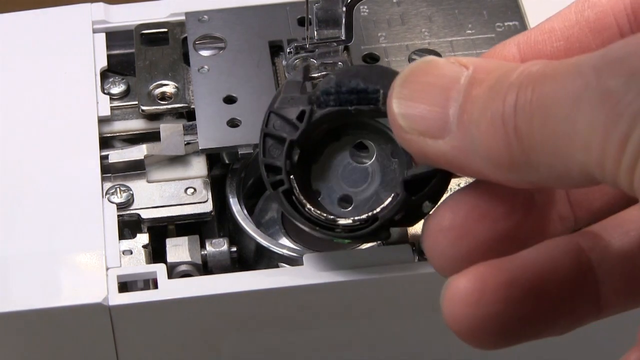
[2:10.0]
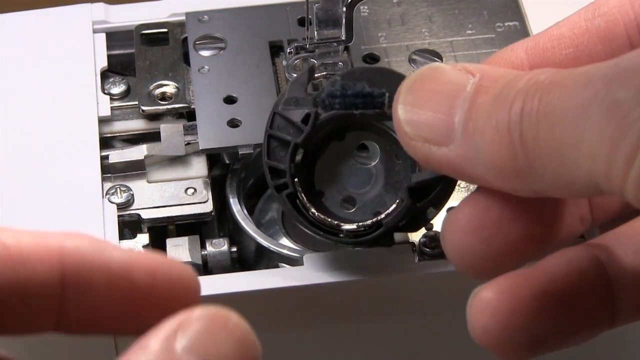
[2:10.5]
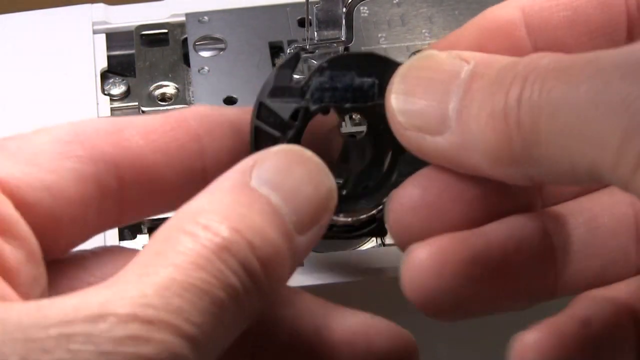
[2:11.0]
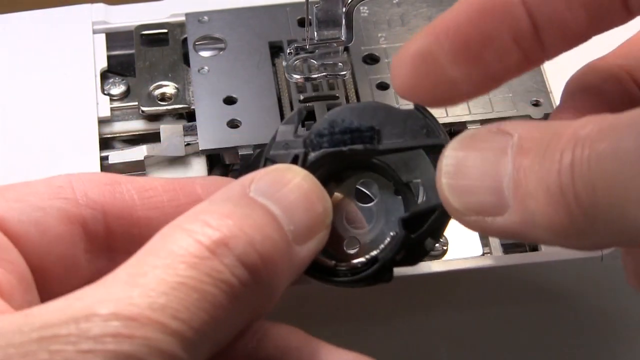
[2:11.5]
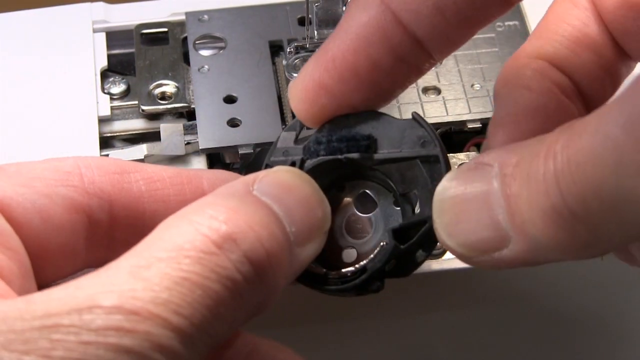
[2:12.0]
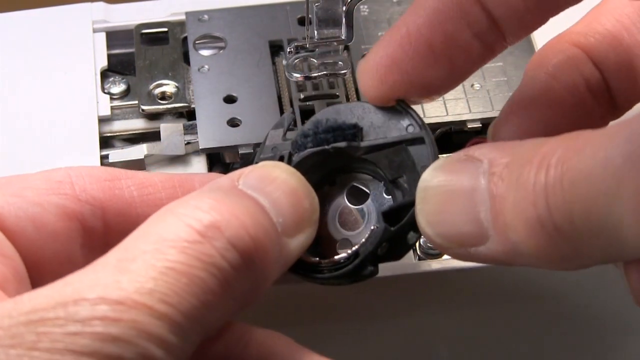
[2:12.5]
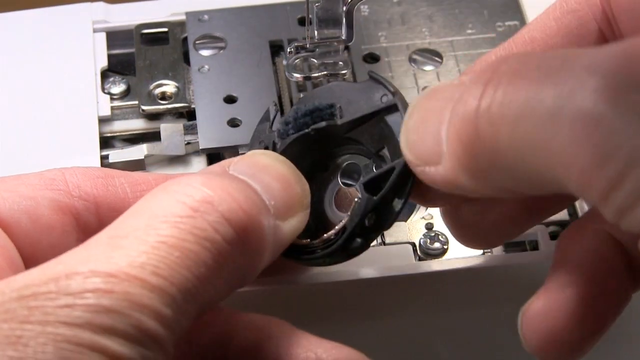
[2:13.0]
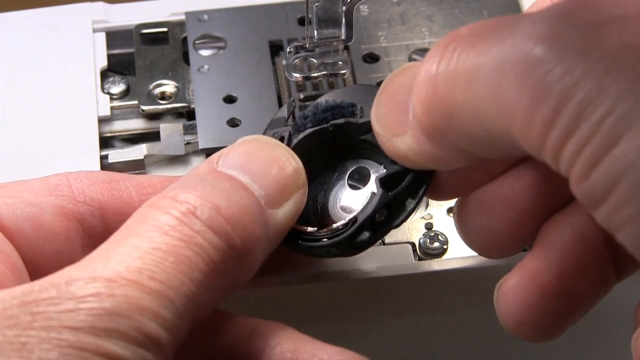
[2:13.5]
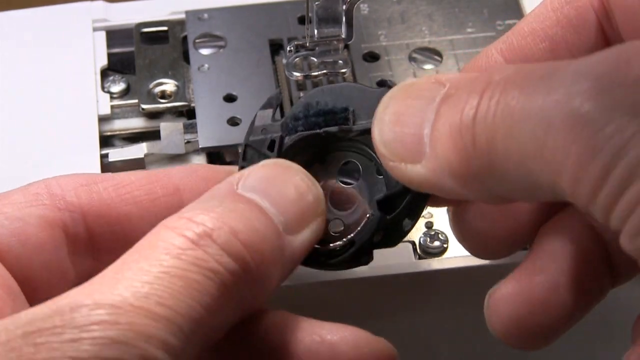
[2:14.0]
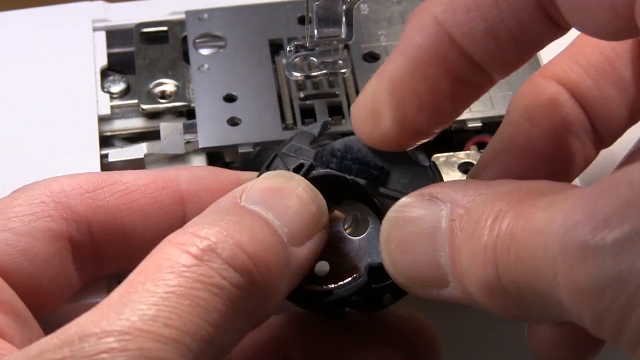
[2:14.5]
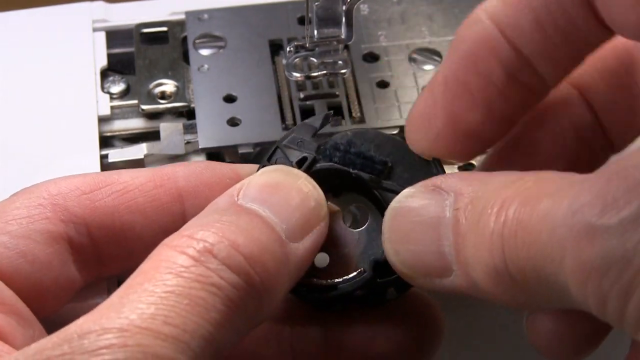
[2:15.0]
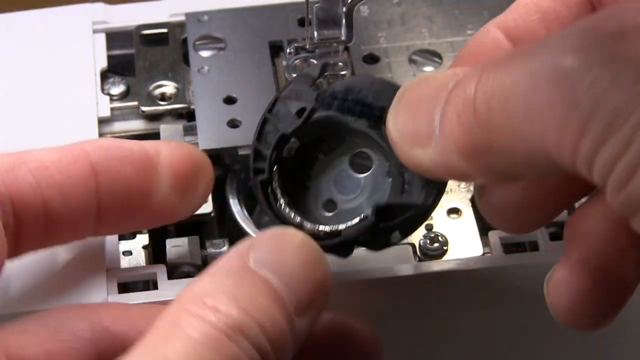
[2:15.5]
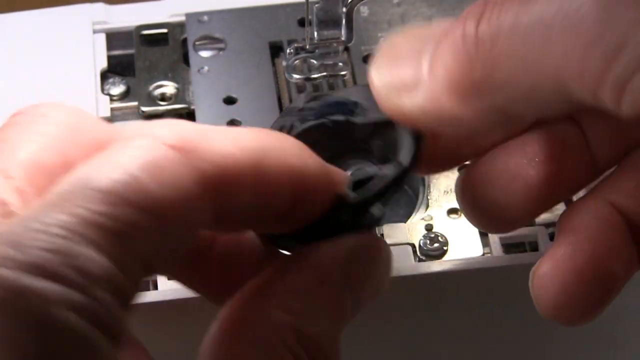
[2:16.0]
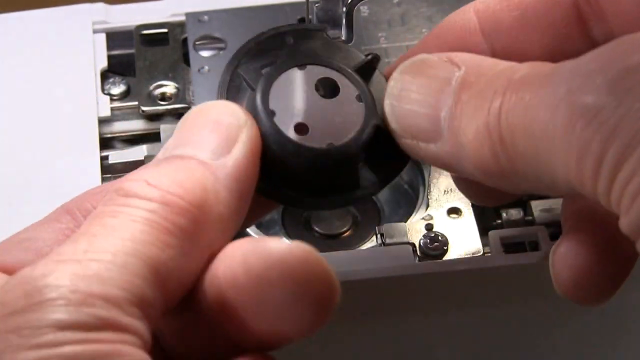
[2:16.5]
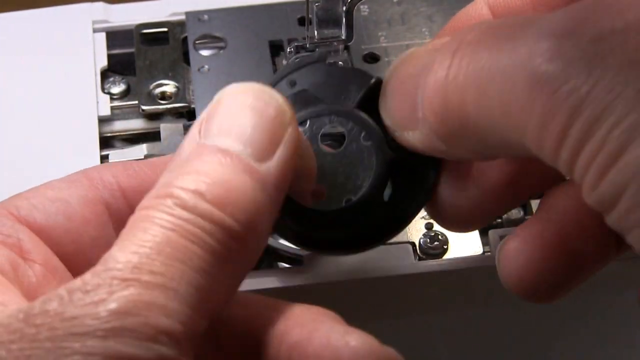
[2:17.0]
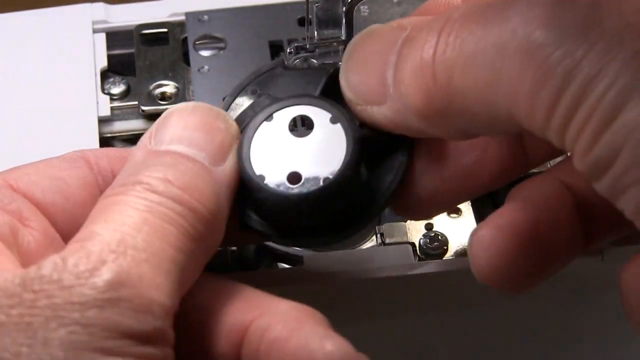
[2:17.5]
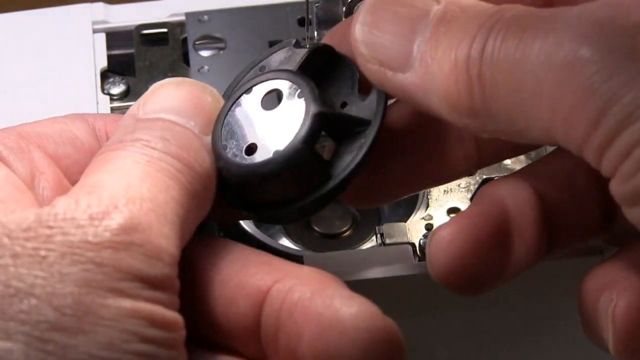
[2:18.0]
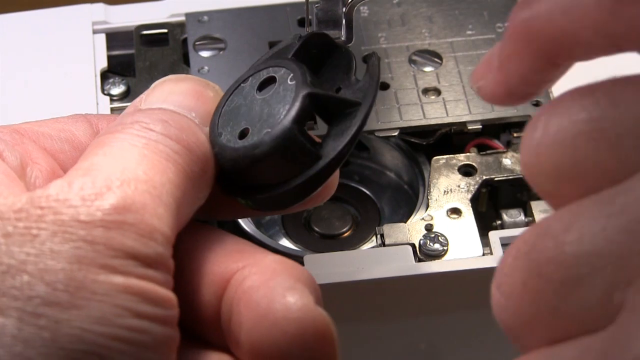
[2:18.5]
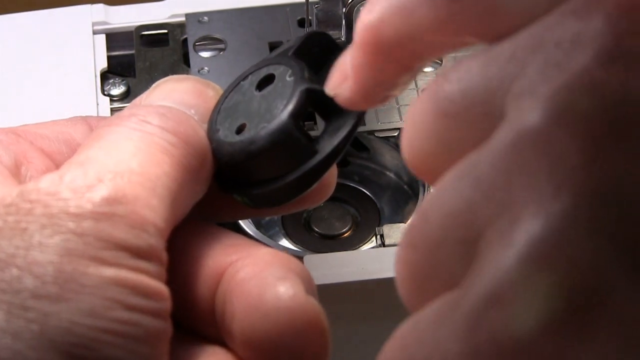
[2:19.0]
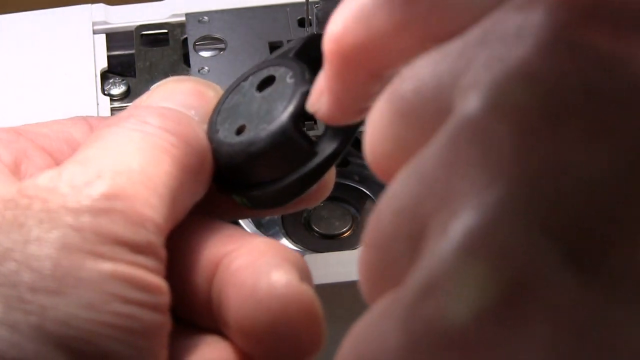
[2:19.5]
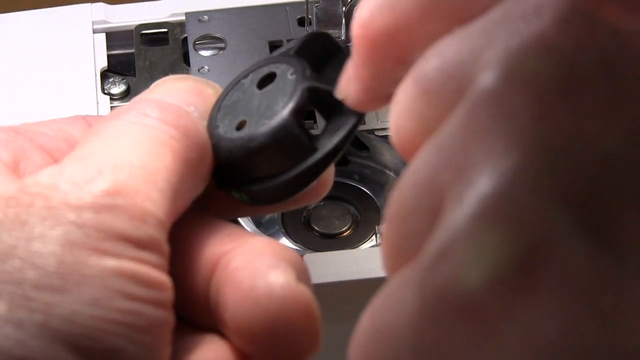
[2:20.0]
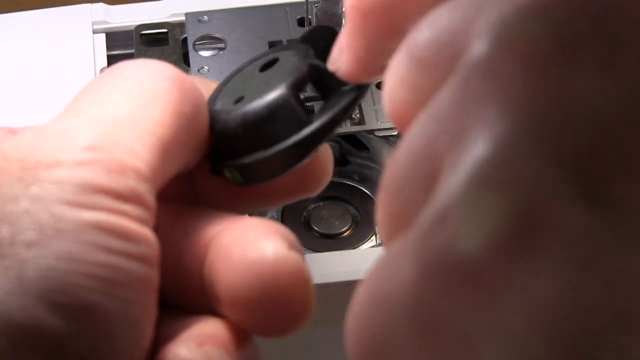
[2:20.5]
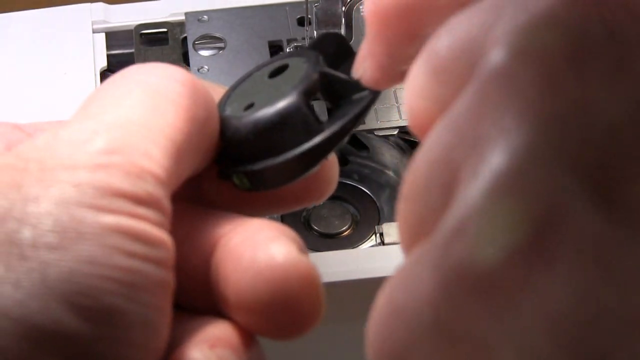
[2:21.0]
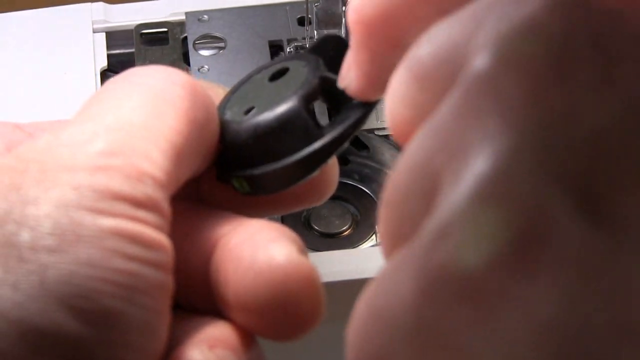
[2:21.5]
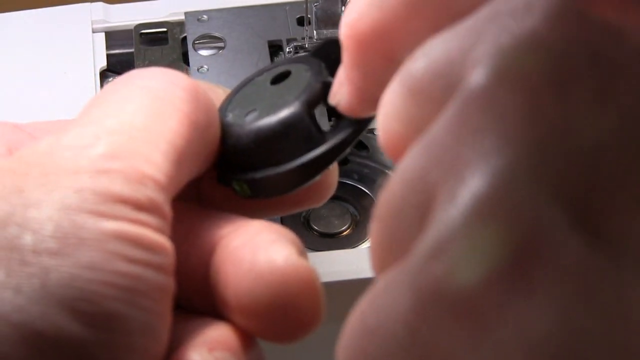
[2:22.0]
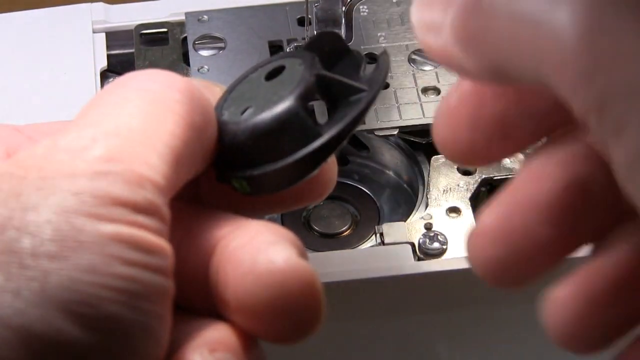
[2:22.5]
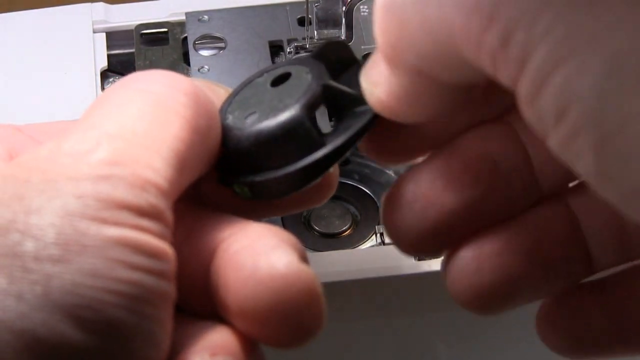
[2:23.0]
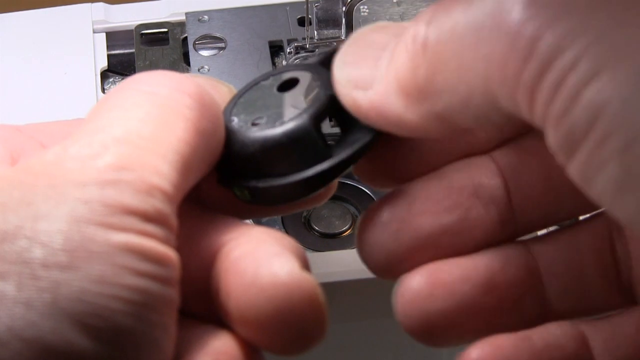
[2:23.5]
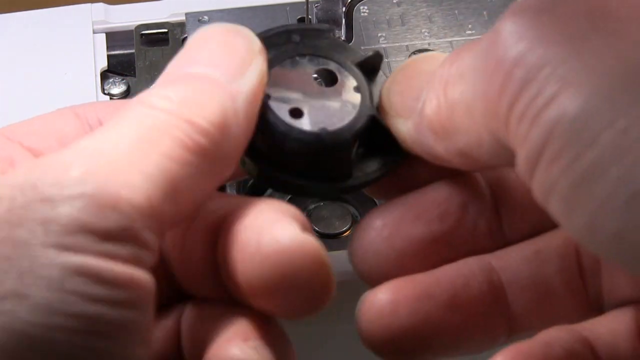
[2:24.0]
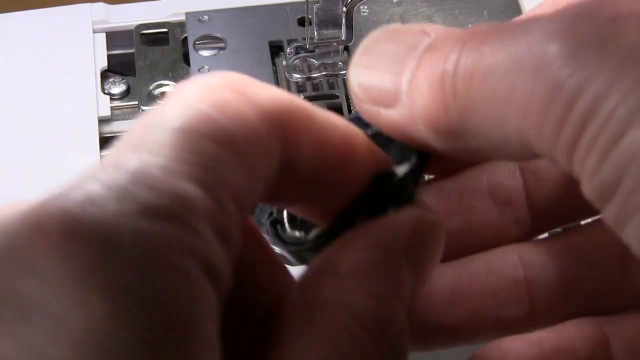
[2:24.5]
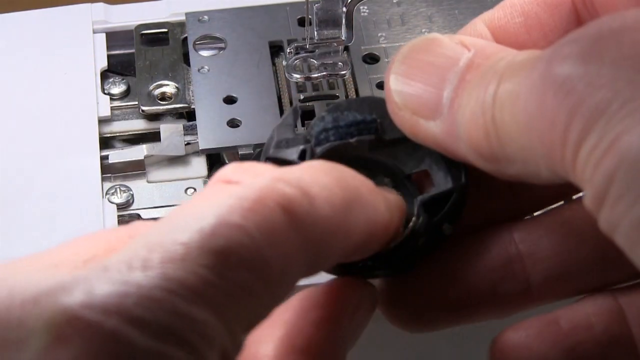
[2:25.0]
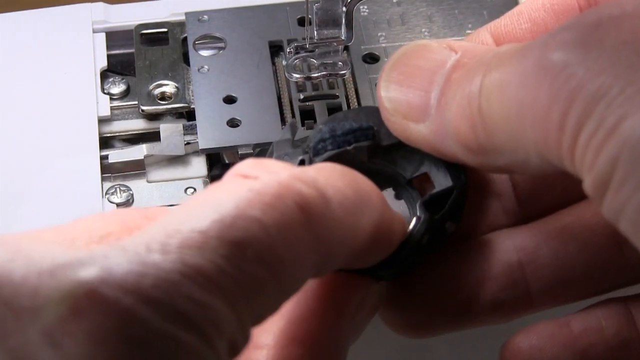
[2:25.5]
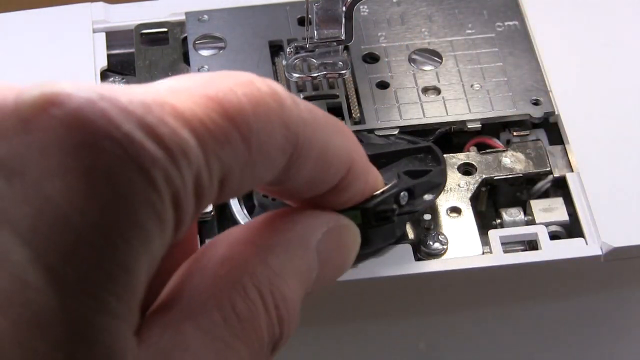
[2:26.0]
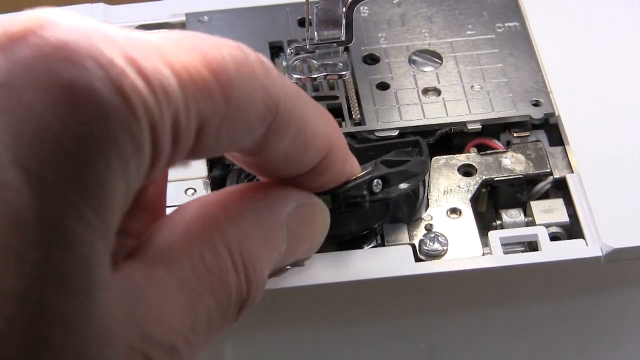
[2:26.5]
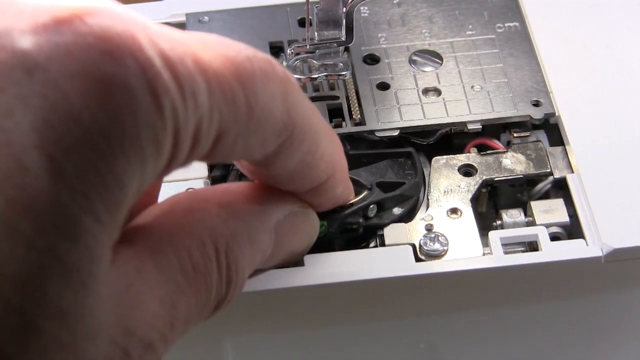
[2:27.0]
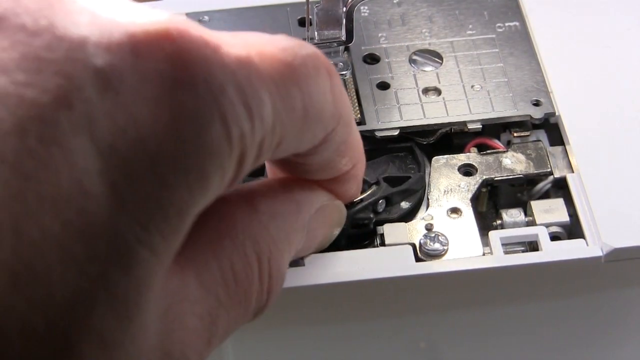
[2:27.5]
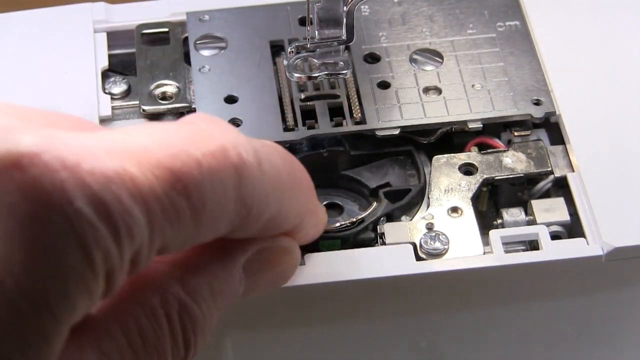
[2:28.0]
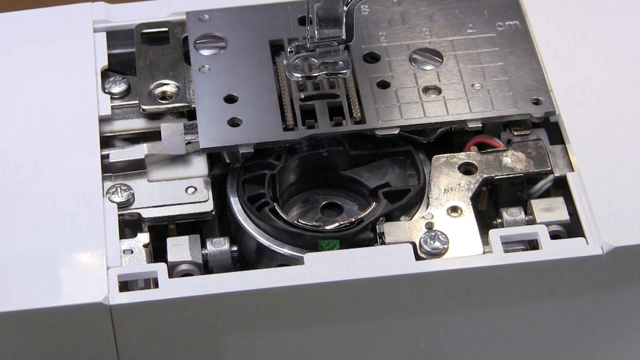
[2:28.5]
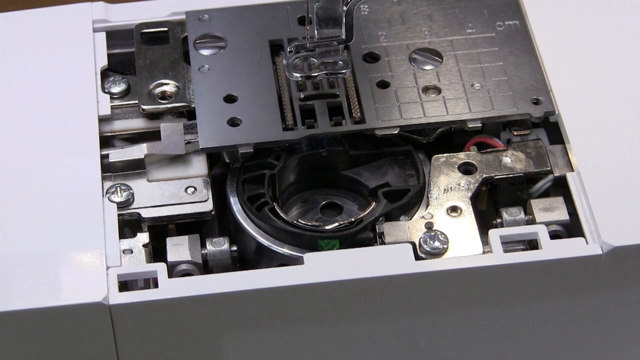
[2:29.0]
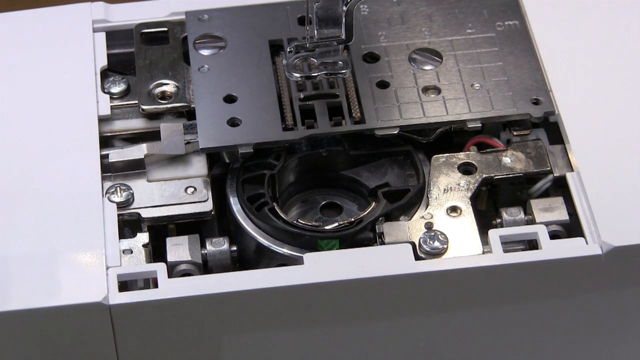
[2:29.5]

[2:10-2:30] The sewing machine remains in view. At its top is the metal part where the needle goes through the hole; the needle is there but not going through the hole at this point. The metal plate is underneath, and the bobbin is still disassembled. With both hands, the man holds one of the bobbin parts he took out earlier and touches its edges, turning it around and kind of filing it with his nails. He then puts it back on the disassembled bobbin, beginning to reassemble it.